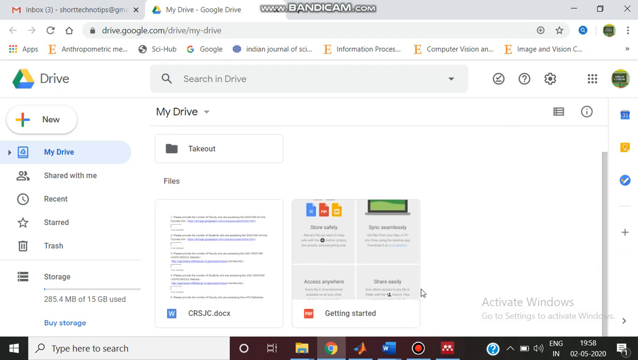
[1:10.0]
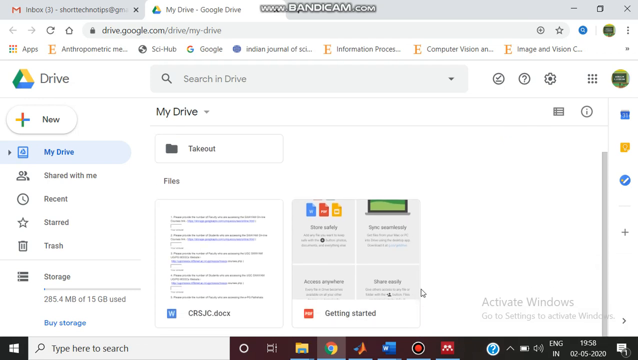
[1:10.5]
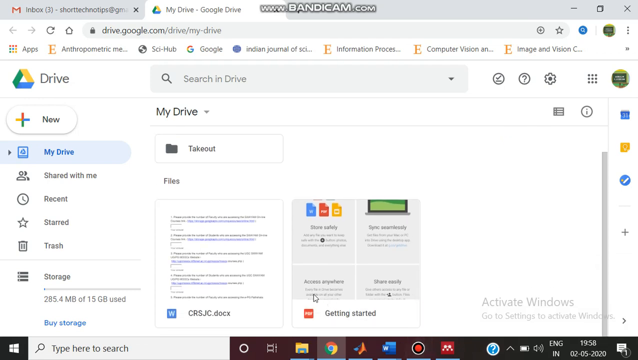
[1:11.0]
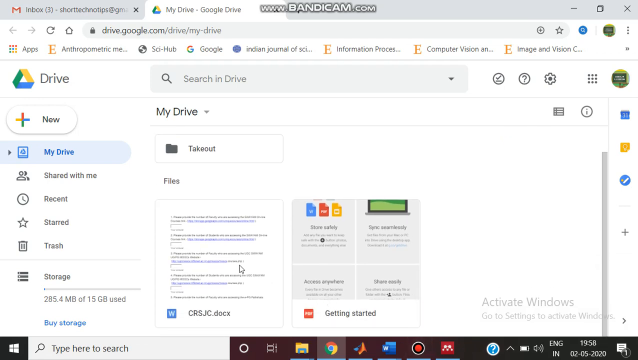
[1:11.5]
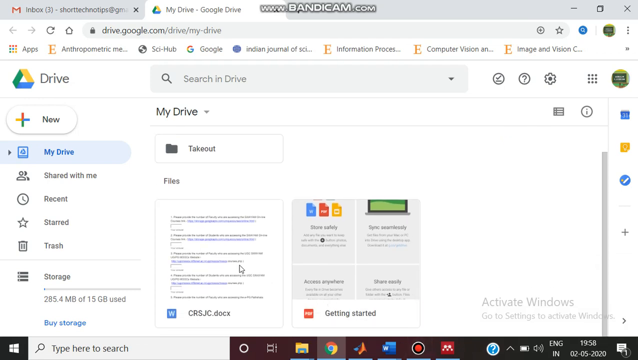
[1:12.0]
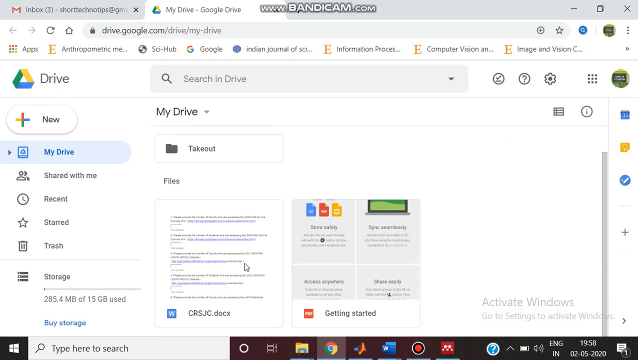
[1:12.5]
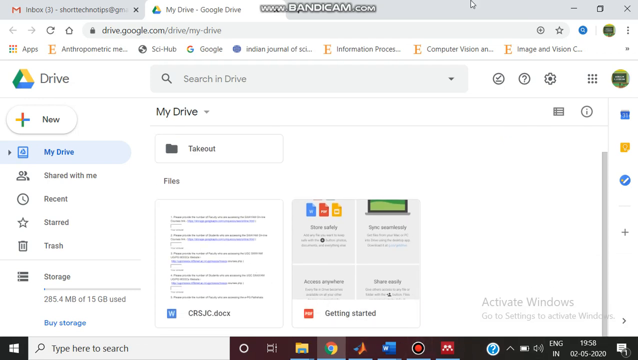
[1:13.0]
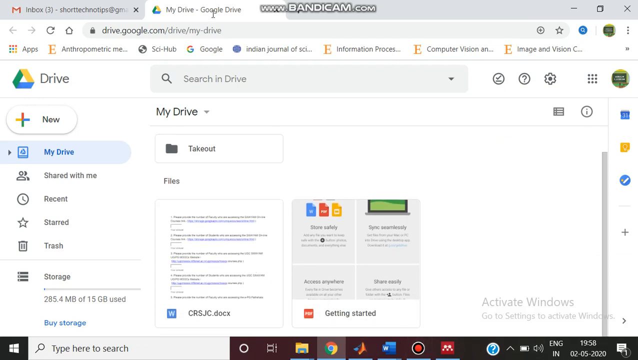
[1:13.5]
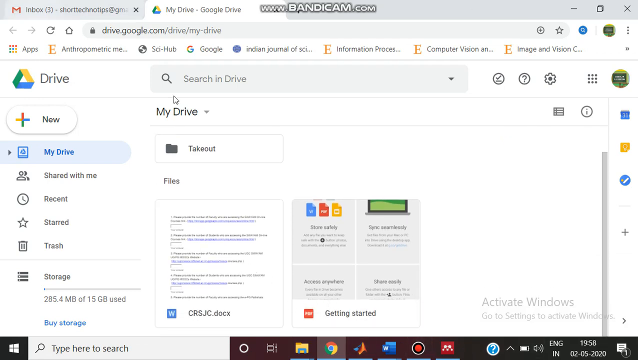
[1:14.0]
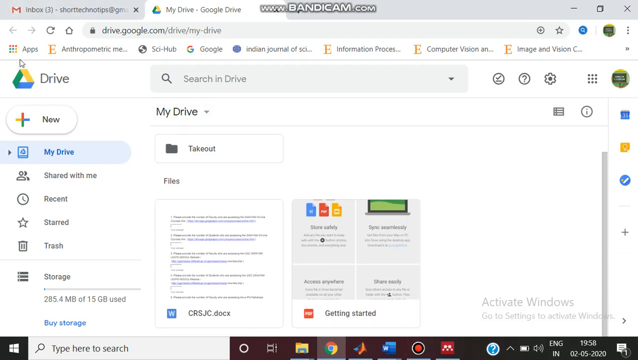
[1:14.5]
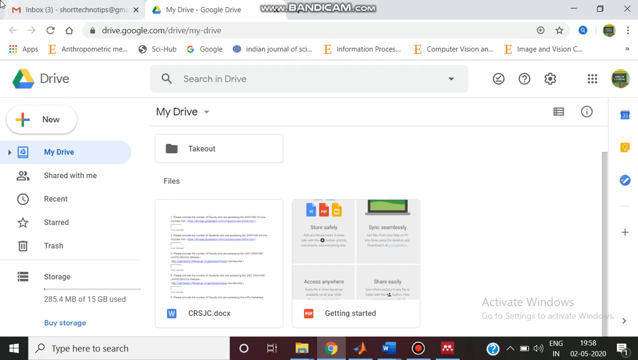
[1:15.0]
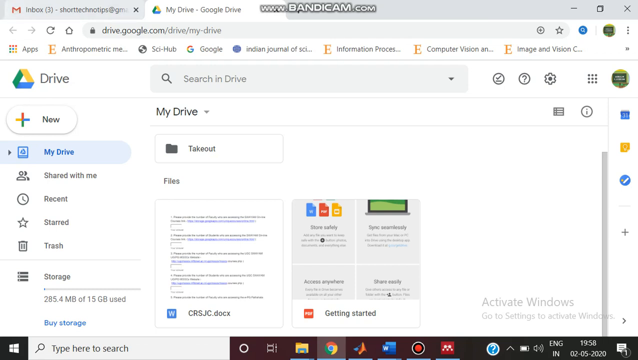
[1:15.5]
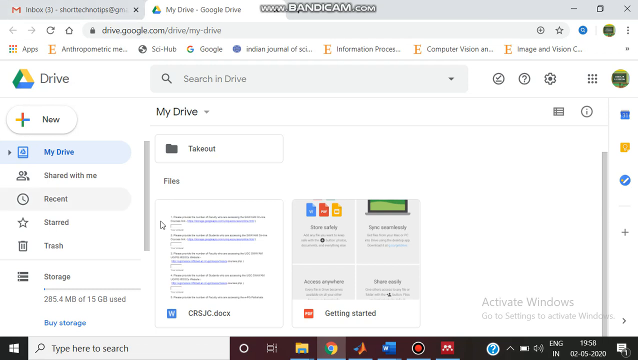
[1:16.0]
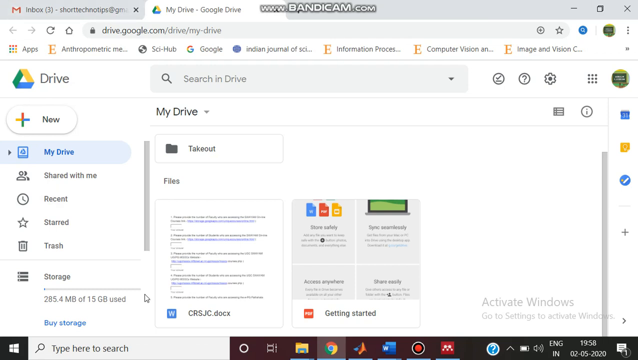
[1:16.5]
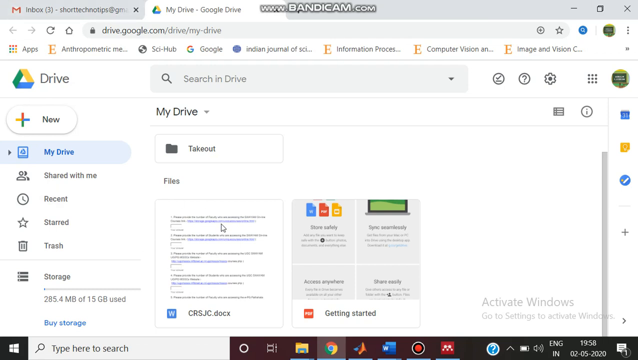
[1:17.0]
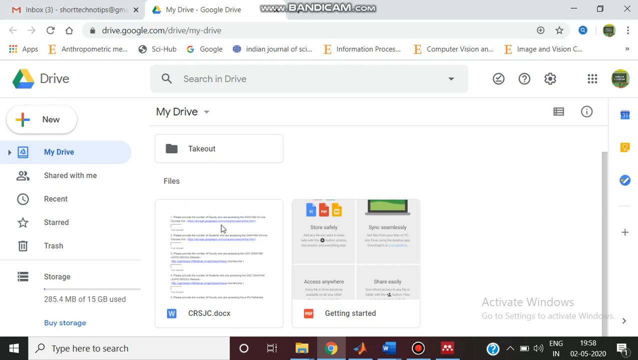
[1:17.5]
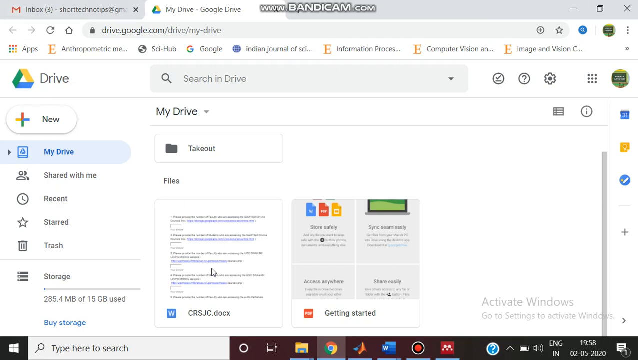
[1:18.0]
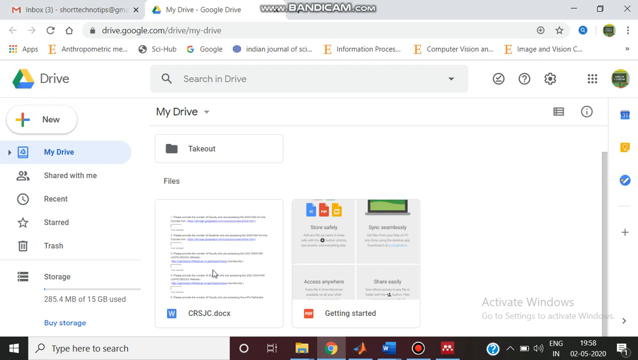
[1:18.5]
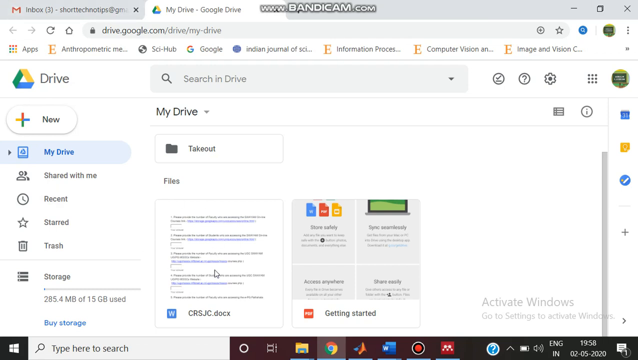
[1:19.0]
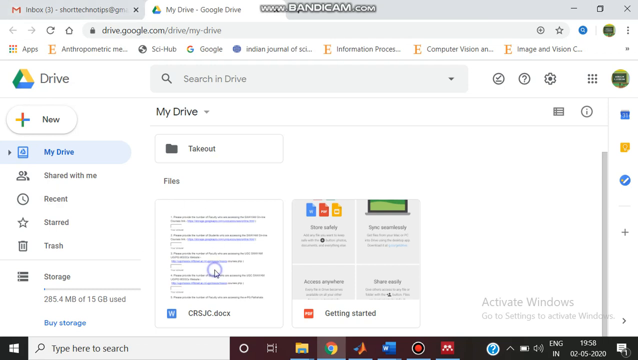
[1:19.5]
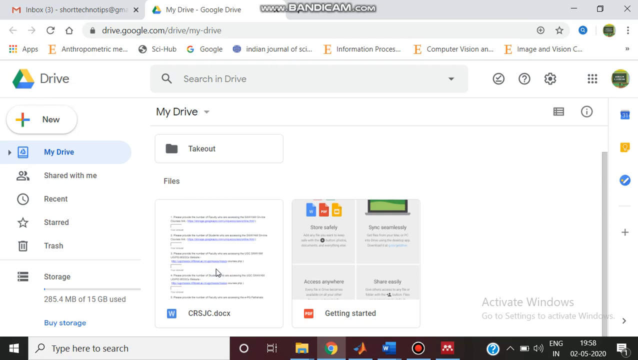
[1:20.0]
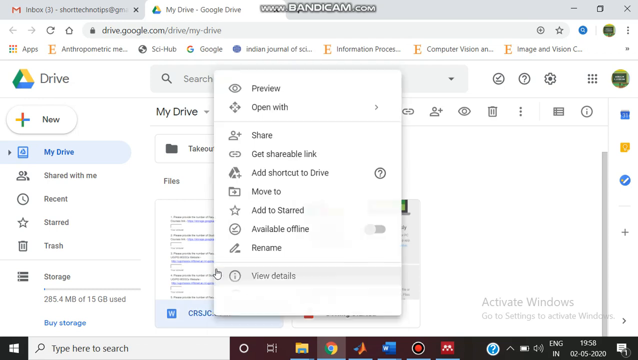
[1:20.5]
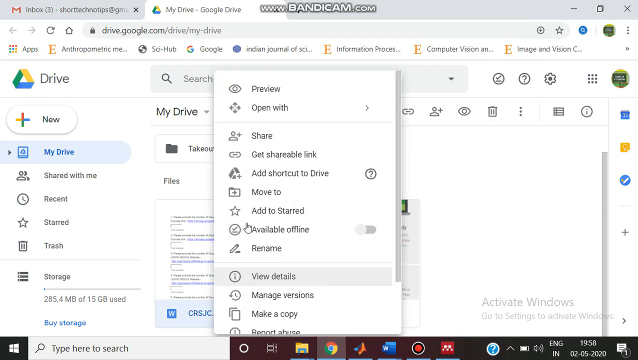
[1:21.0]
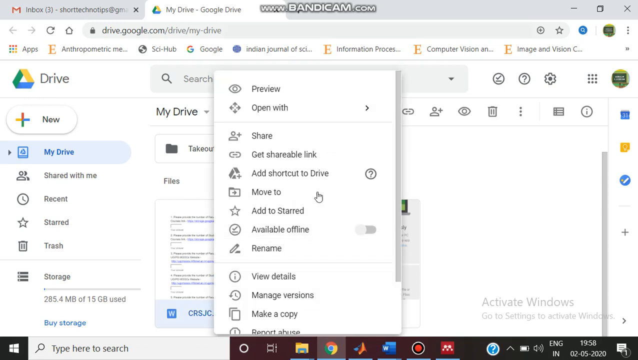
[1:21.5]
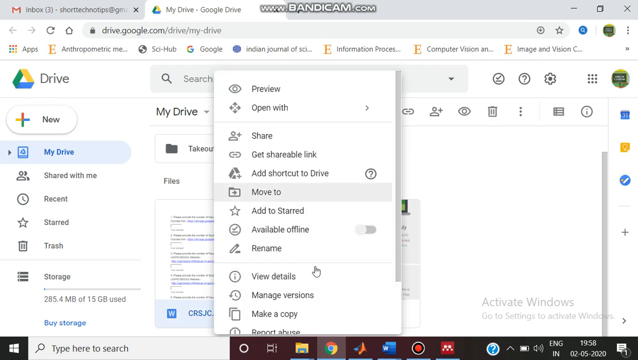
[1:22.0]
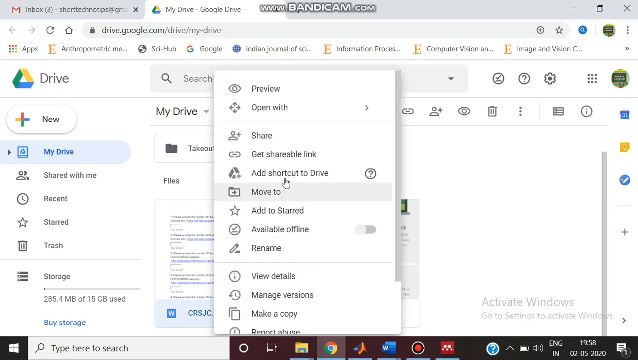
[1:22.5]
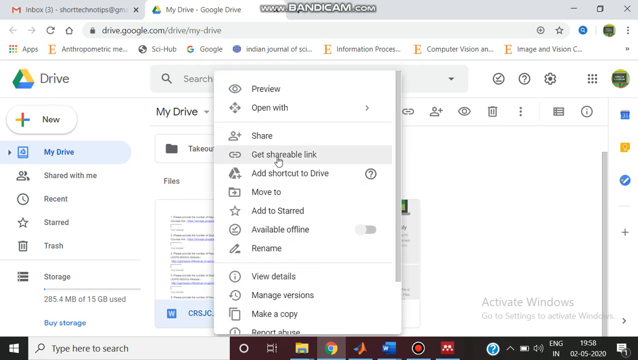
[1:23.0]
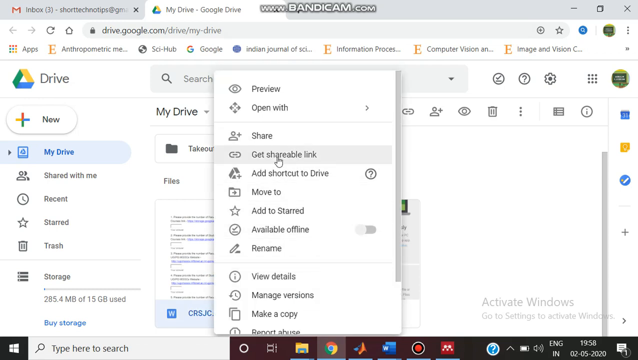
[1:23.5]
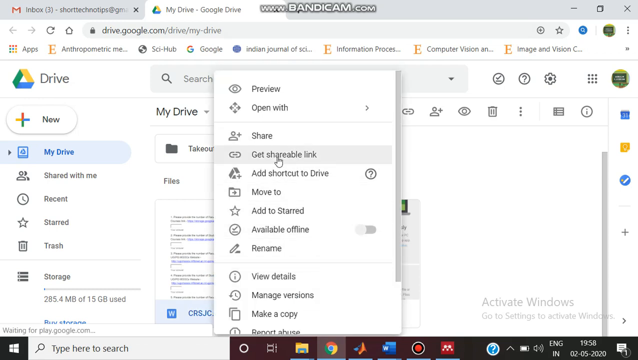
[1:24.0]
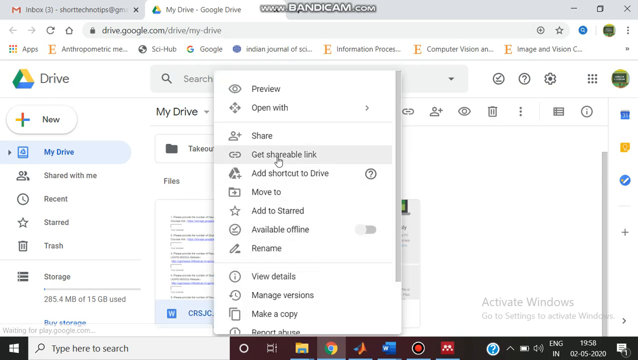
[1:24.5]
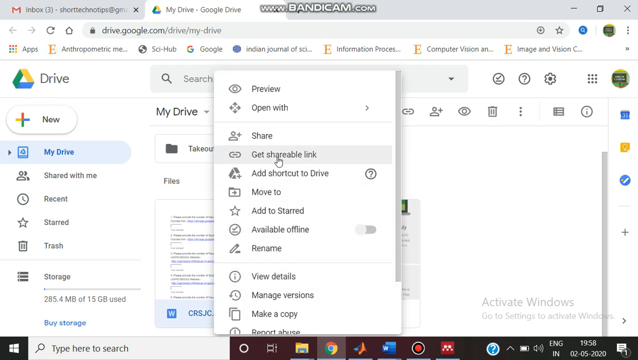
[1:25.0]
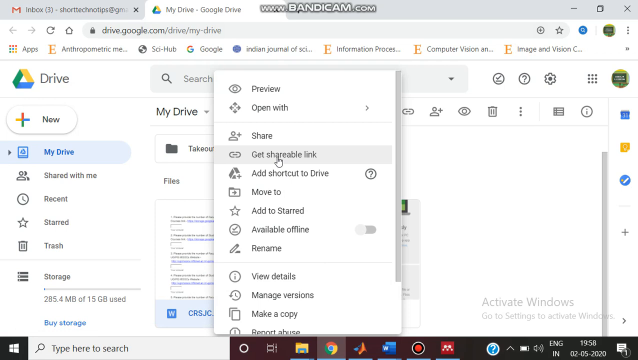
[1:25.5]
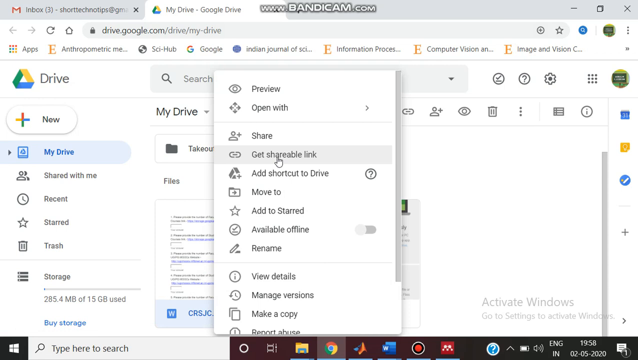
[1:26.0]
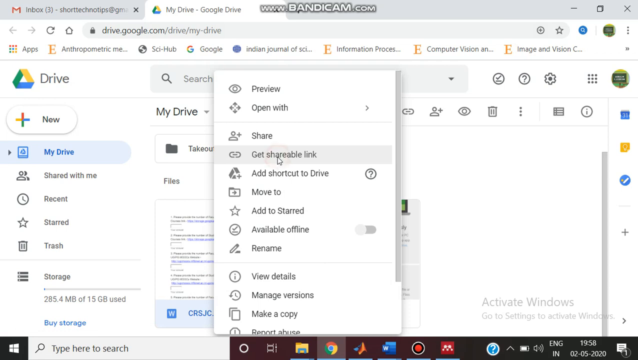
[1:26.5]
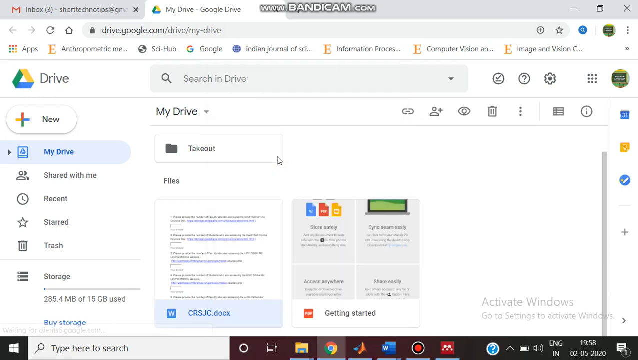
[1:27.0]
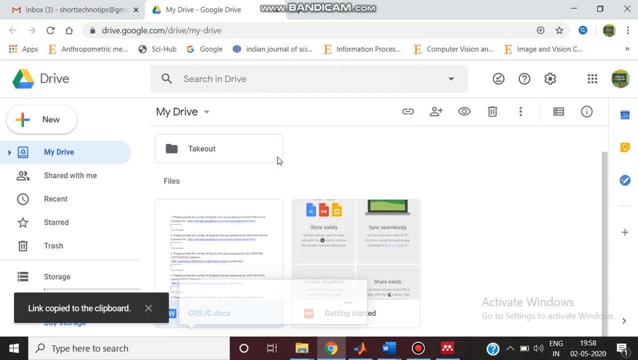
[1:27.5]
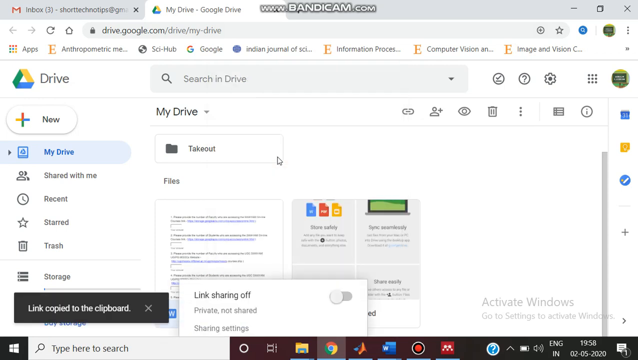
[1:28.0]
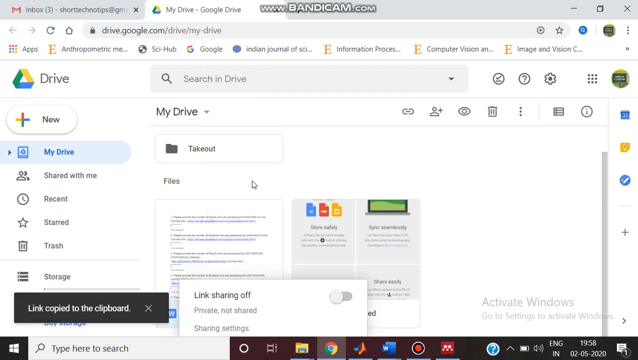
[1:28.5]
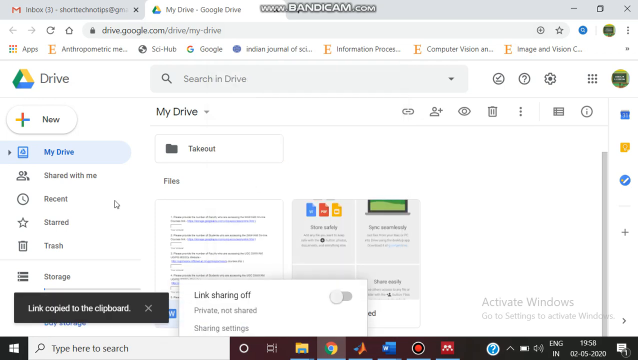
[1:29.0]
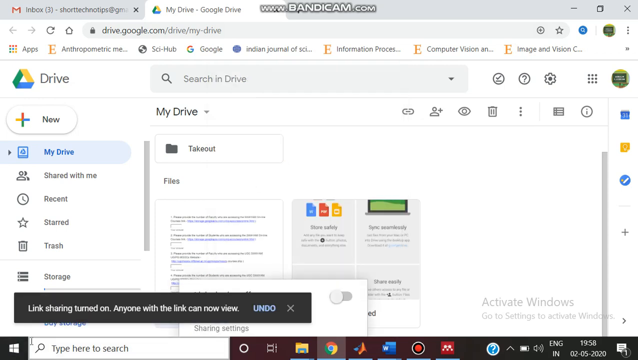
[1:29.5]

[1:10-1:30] Two tabs are open in Google Chrome on a Windows PC: Gmail and My Drive in Google Drive. The address www.bandicam.com is at the very top. The person's cursor moves around the page and stops on a Windows document named crsjc.docx. They hover around it and click it, opening a drop-down box, stop on "Get Shareable Link" and click it. A message appears saying the link was copied to the clipboard, along with a pop-up with options for link sharing on, private, not shared, or sharing settings. The cursor moves around the page without clicking anything else. There is also a Getting Started document and a Takeout item. On the left are tabs for My Drive, the current location, then Shared with me, Recent, Starred and Trash, and finally the storage amount, 285.4 megabytes of 15 gigabytes used.